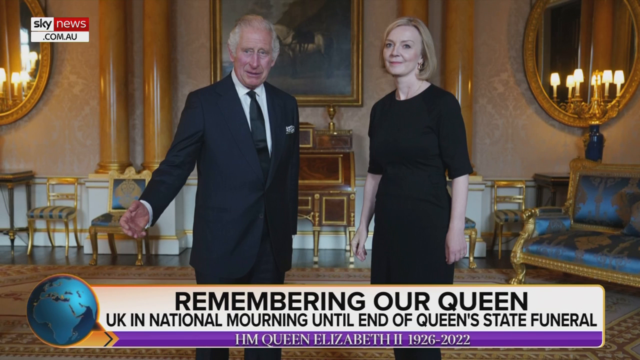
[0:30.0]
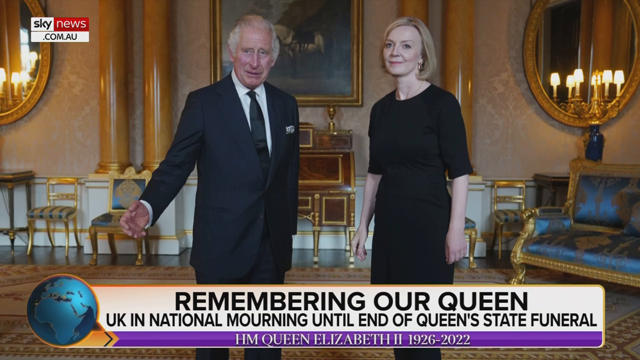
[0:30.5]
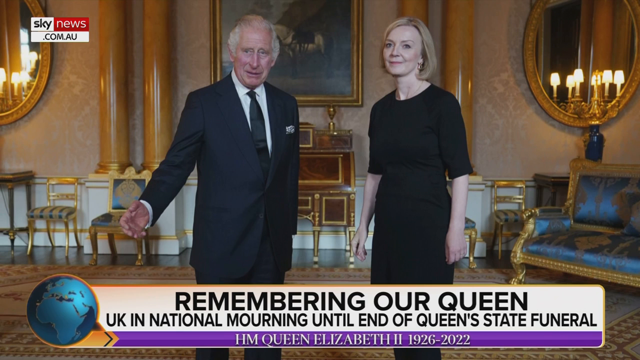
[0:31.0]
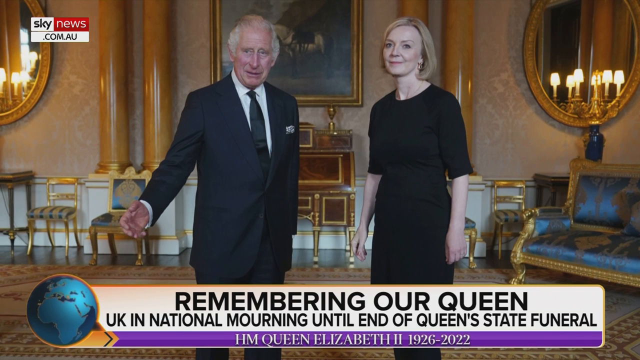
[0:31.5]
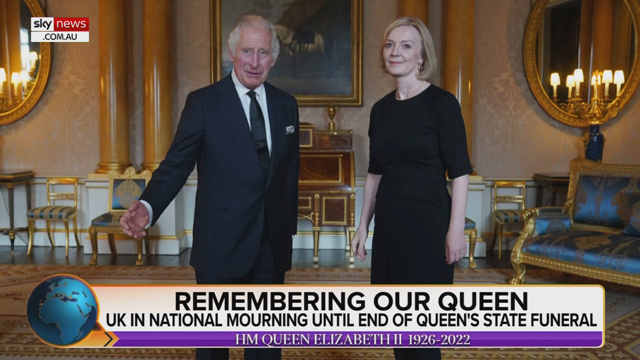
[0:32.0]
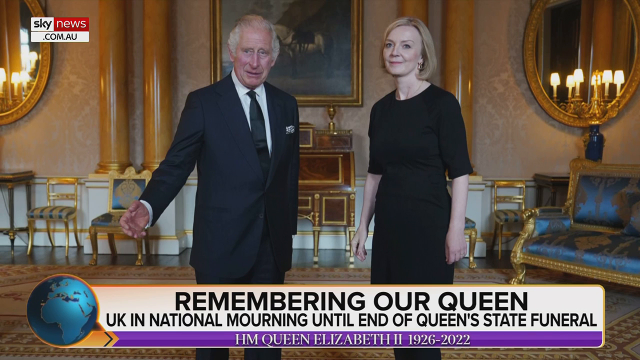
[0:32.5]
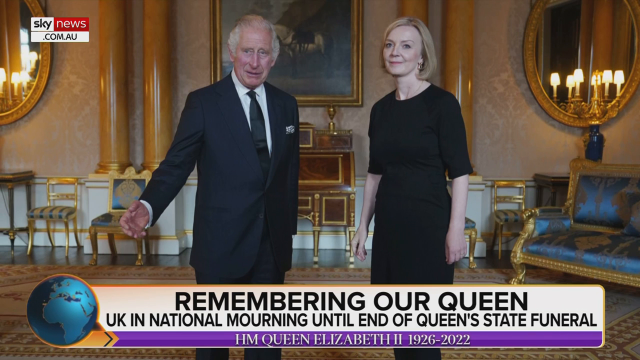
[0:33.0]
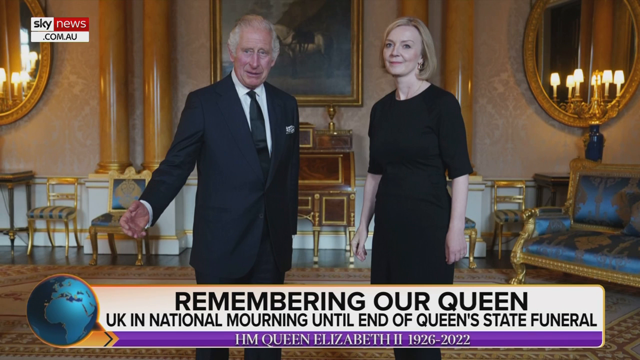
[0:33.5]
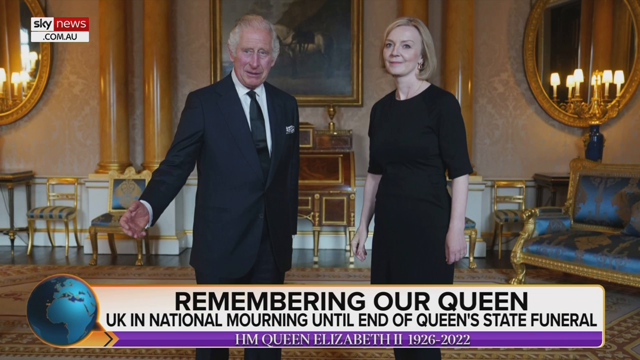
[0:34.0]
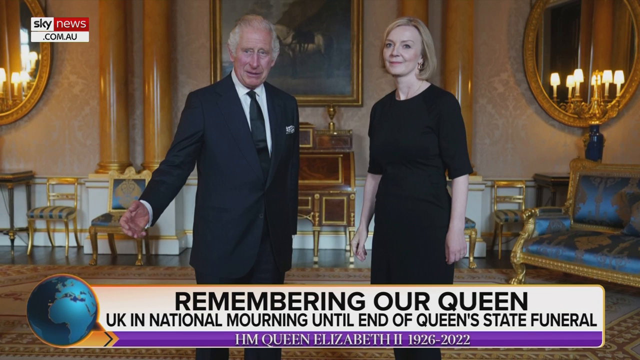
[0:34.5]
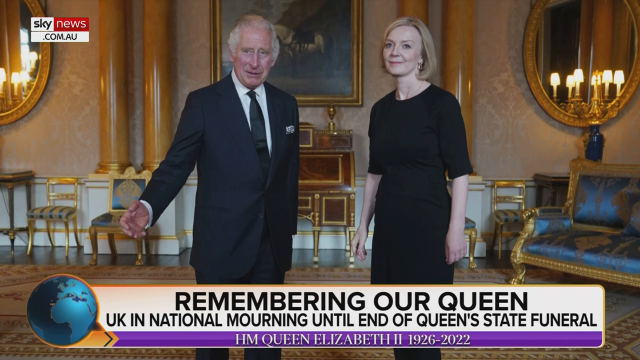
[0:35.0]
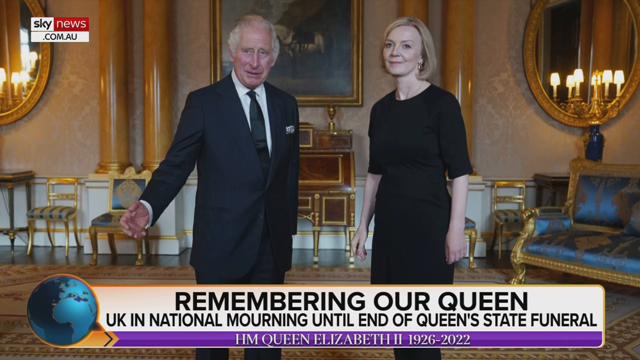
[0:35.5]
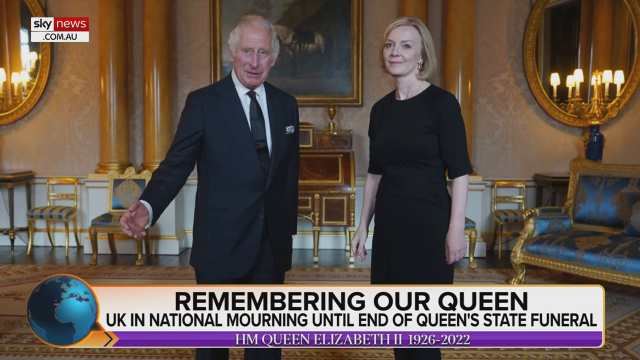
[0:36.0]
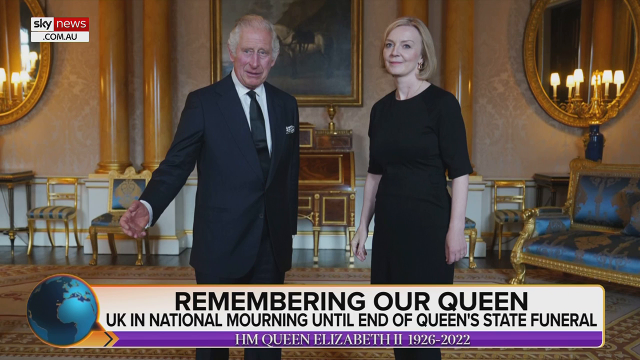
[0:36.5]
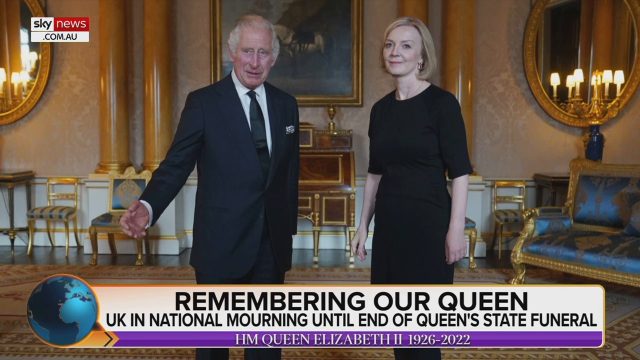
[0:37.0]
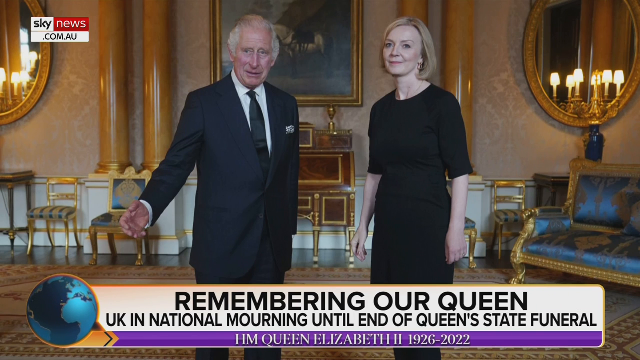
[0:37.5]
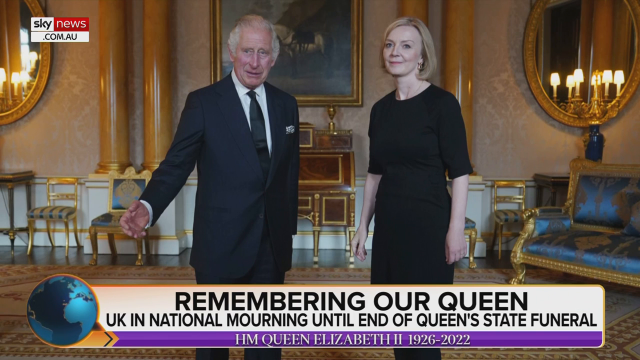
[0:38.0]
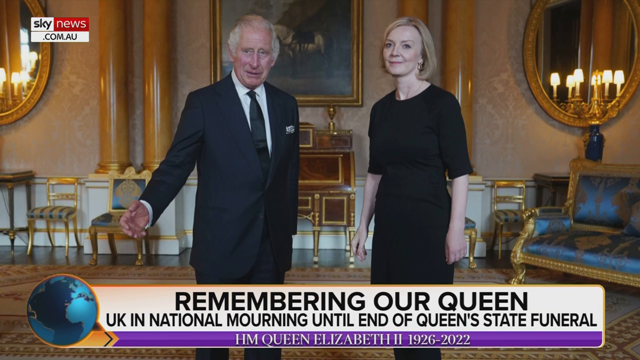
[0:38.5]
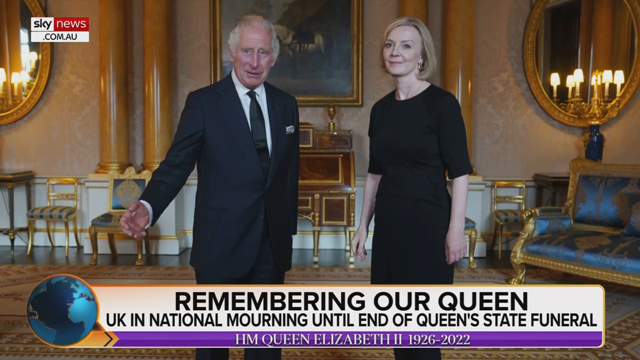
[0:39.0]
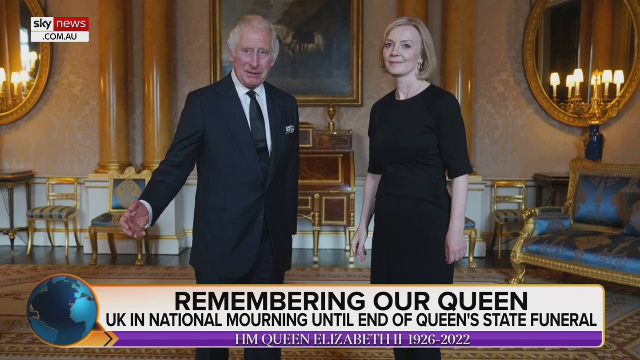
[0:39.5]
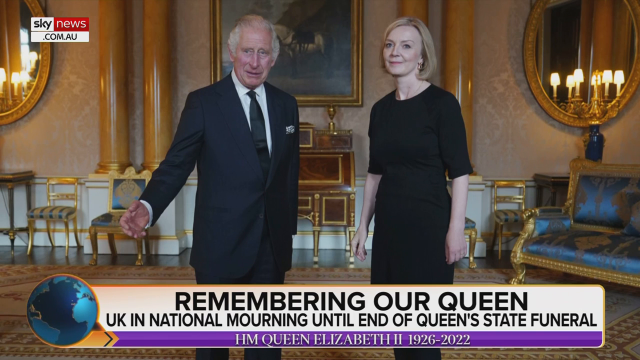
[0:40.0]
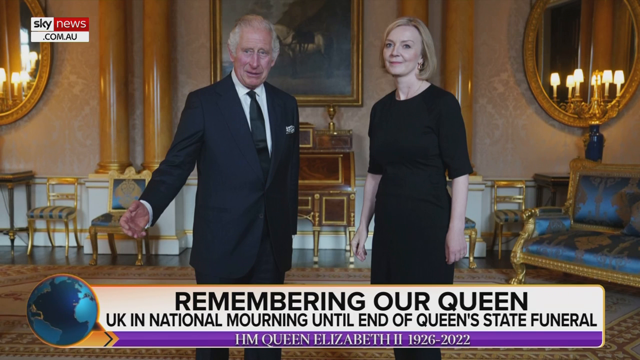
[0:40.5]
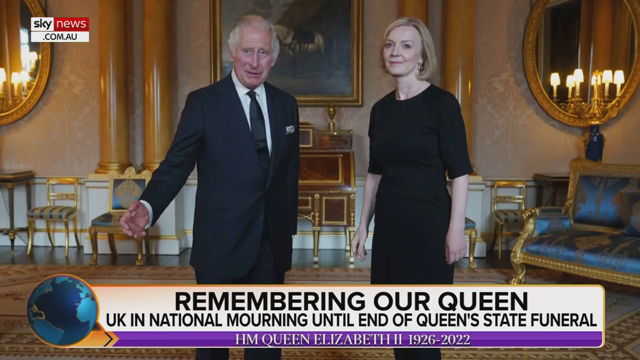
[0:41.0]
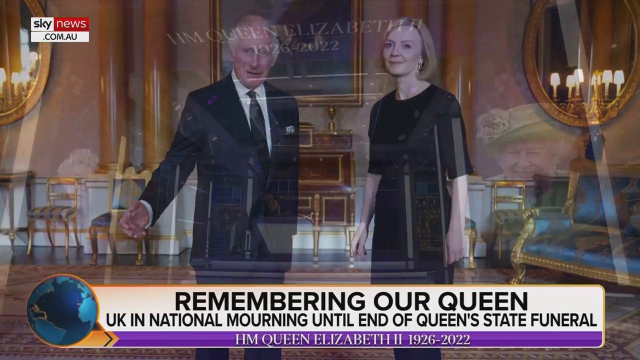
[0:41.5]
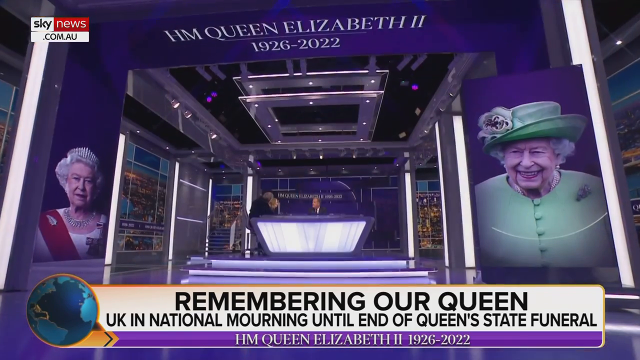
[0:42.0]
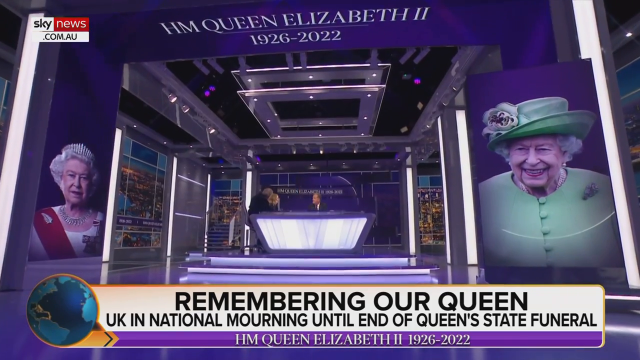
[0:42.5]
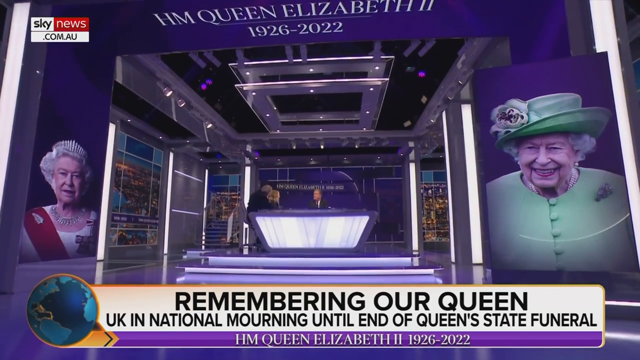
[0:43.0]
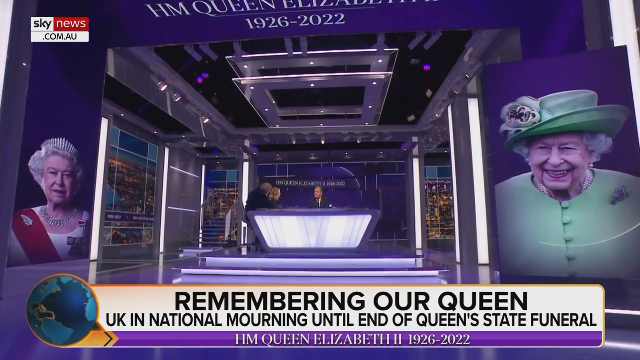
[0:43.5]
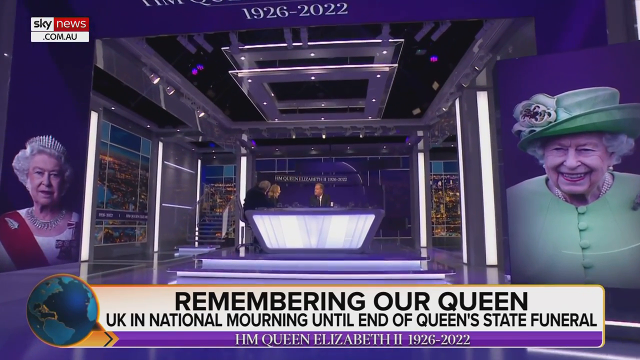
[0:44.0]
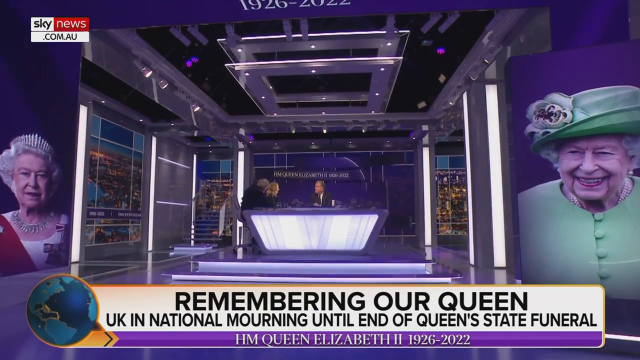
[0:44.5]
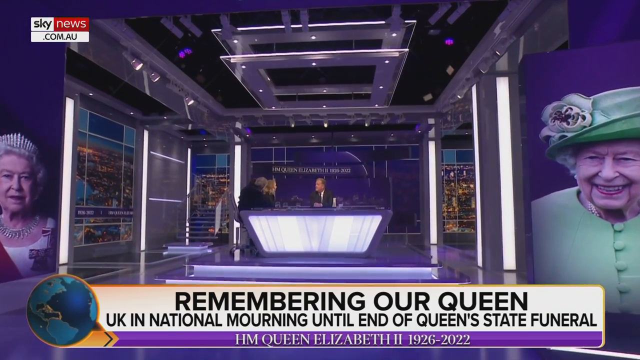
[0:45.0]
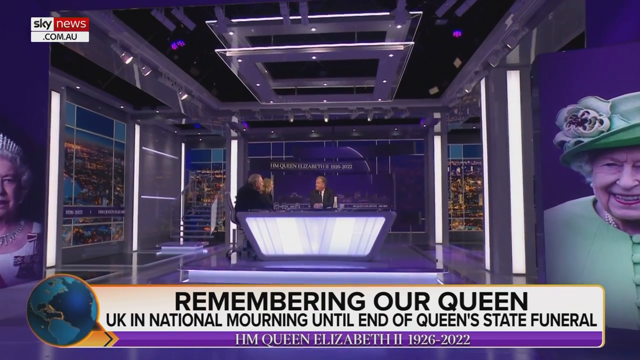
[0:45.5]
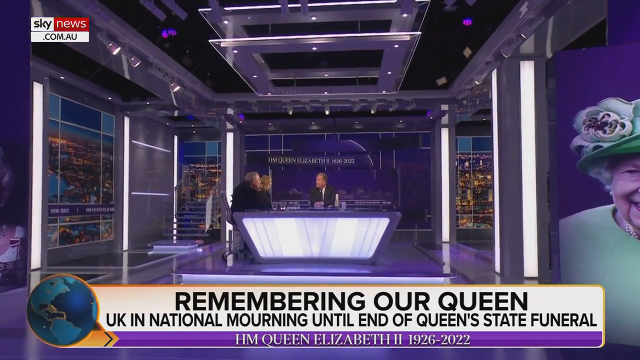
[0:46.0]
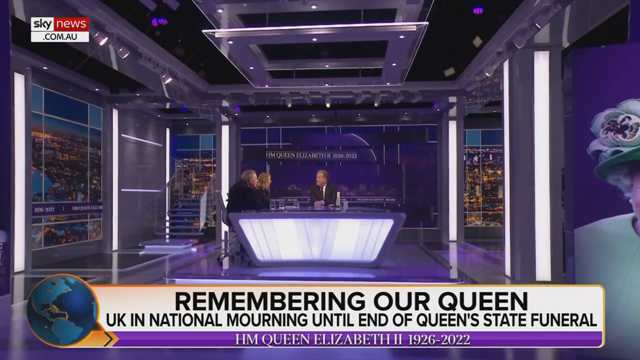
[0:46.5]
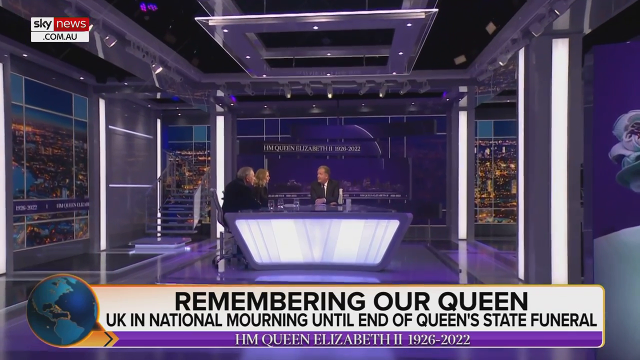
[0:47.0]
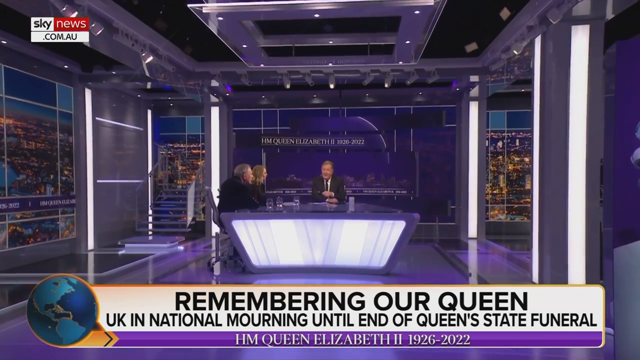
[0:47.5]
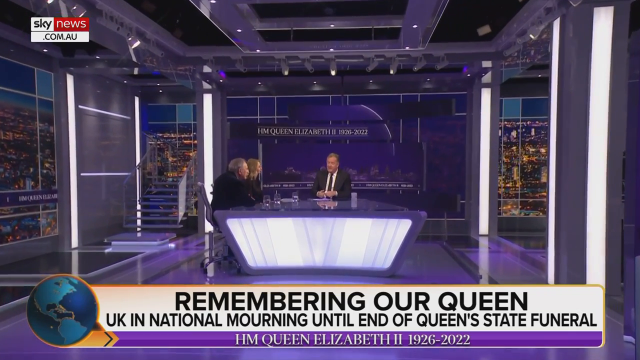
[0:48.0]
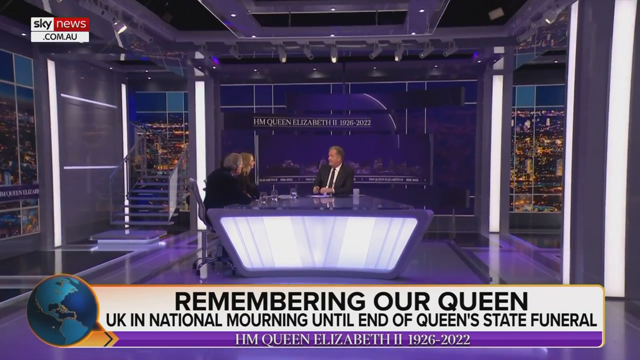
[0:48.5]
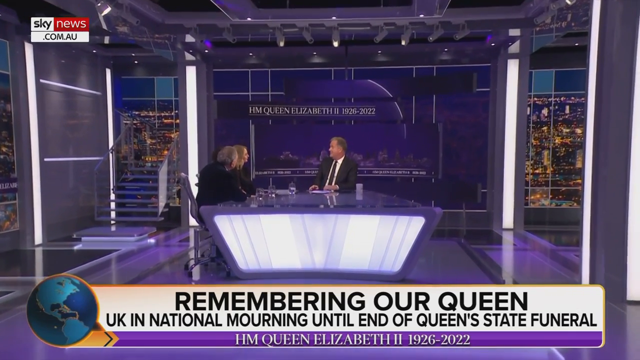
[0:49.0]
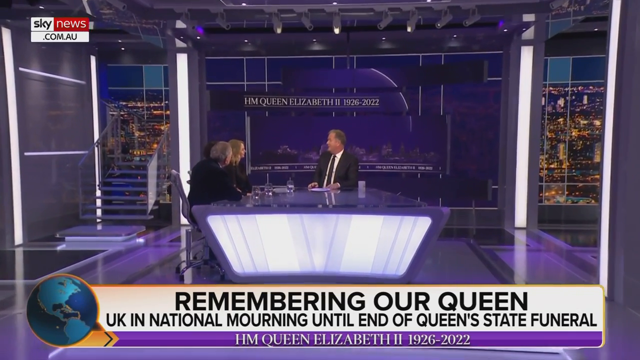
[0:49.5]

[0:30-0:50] In the picture shown, the woman on the right has her hands at her sides and stares forward, while King Charles has his right hand extended outward and also stares forward. King Charles wears a black suit with a black tie and a white shirt. The graphic also reads "UK in national mourning until end of Queen's state funeral", in black text on a white bar along the bottom. On the very bottom edge, white letters on a purple bar read "H.M. Queen Elizabeth II, 1926 to 2022". The video then shows a news studio with very large, wall-size monitors displaying pictures of Queen Elizabeth, one picture on the right and one on the left, and a news desk in the center of the studio.